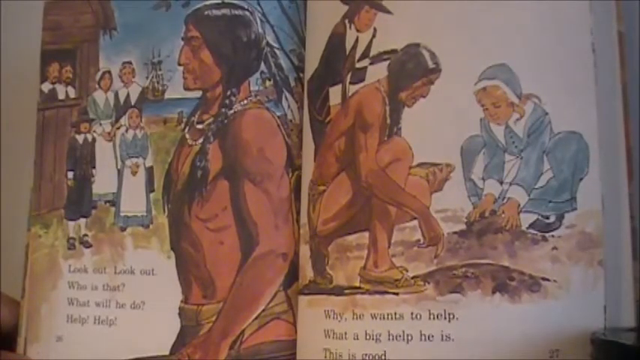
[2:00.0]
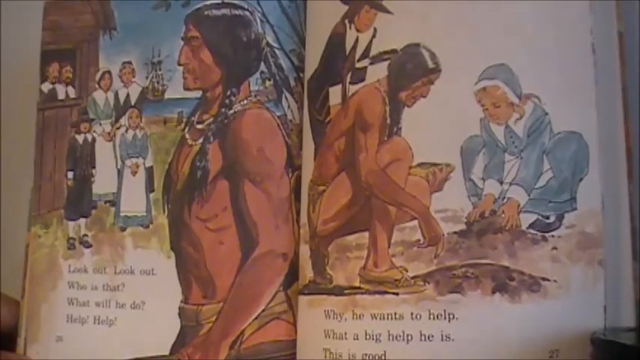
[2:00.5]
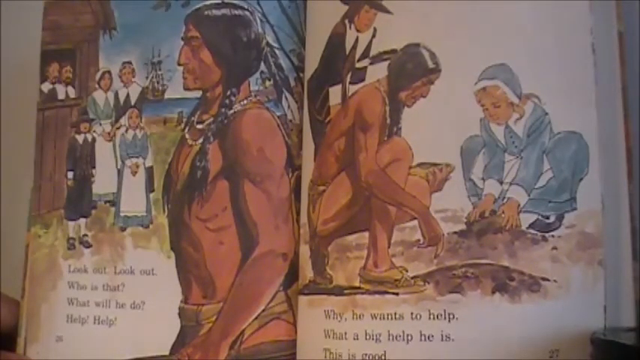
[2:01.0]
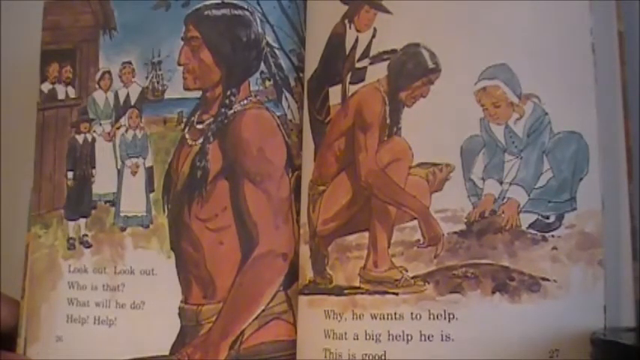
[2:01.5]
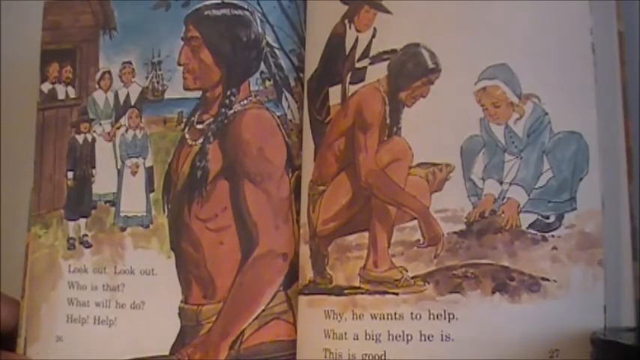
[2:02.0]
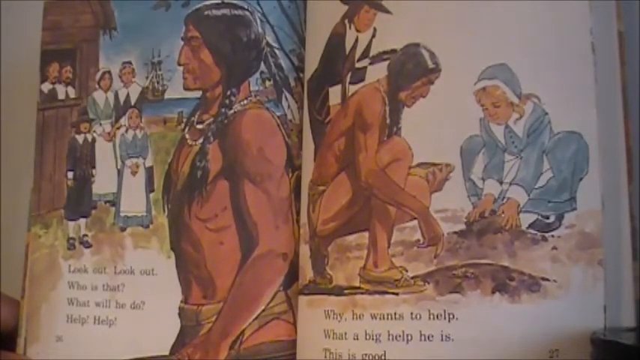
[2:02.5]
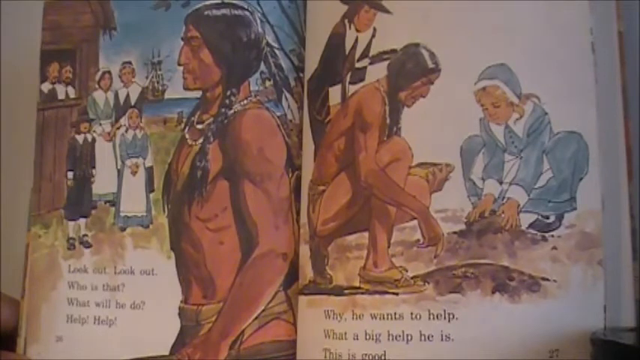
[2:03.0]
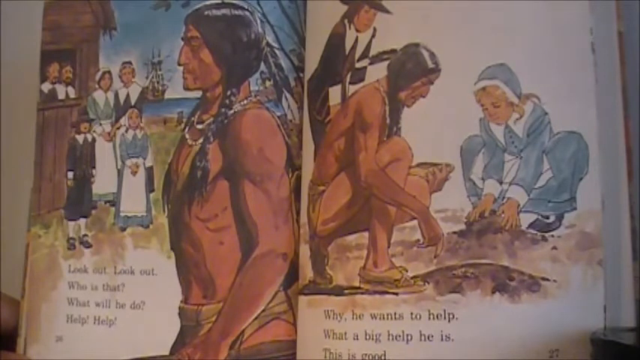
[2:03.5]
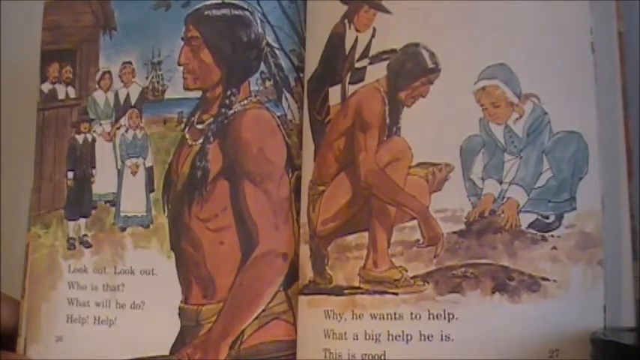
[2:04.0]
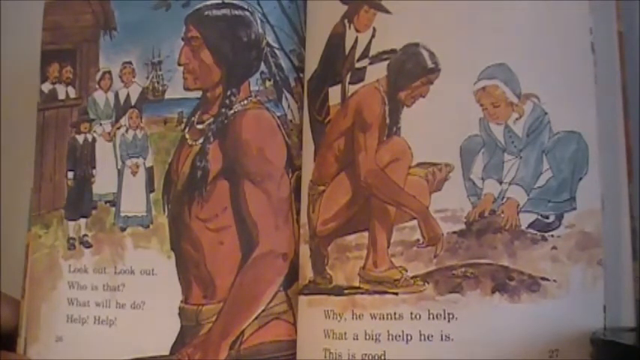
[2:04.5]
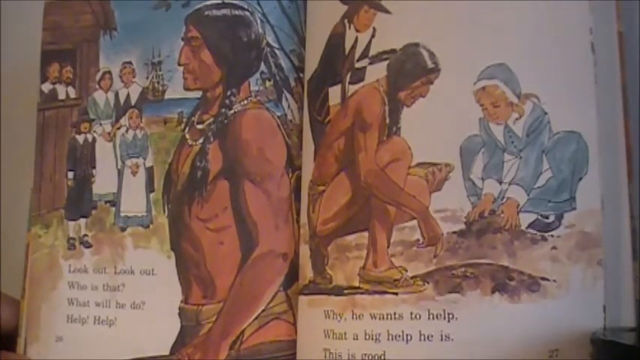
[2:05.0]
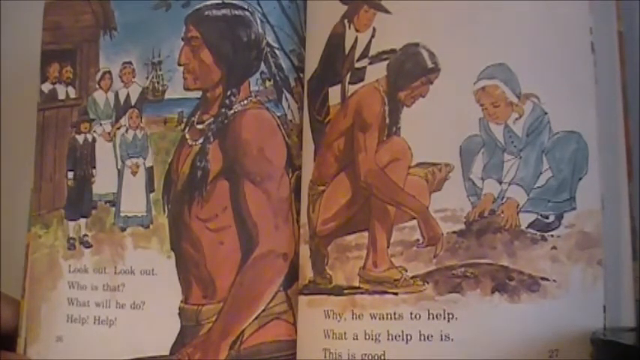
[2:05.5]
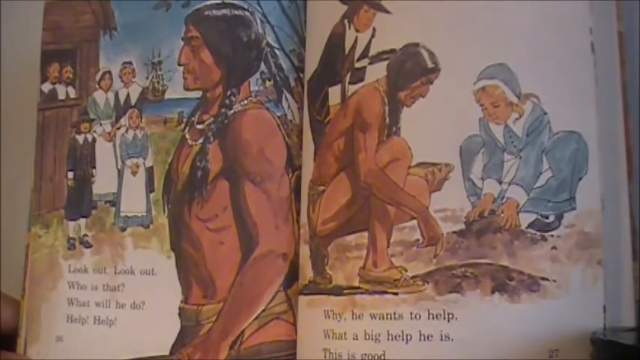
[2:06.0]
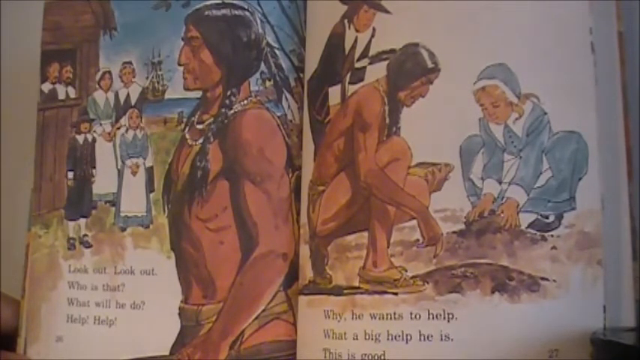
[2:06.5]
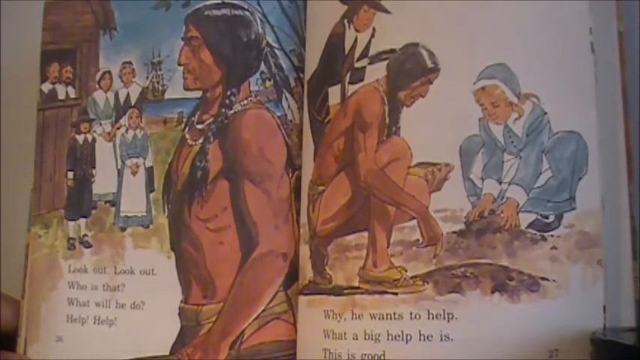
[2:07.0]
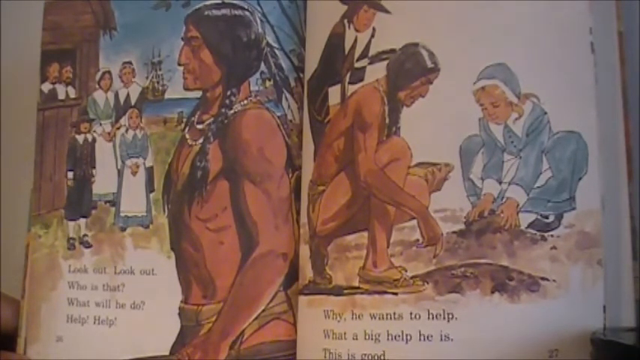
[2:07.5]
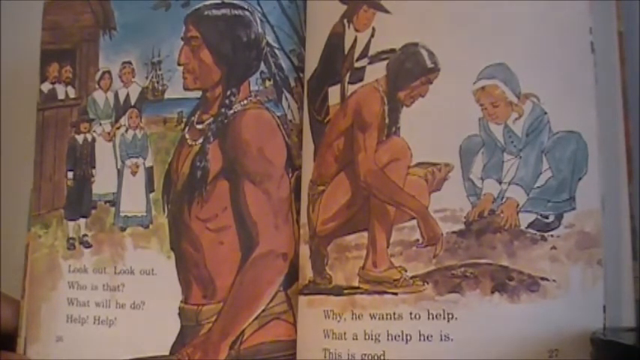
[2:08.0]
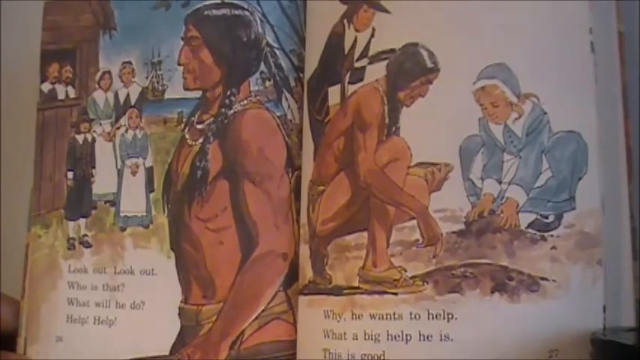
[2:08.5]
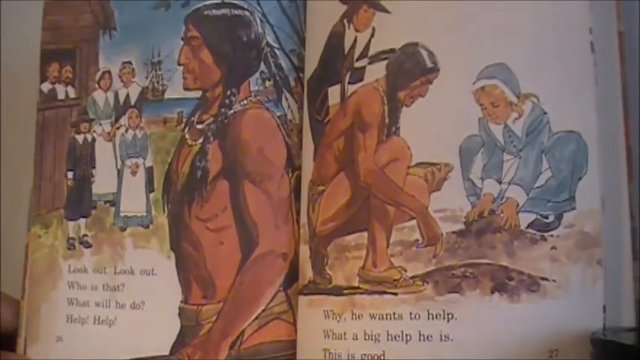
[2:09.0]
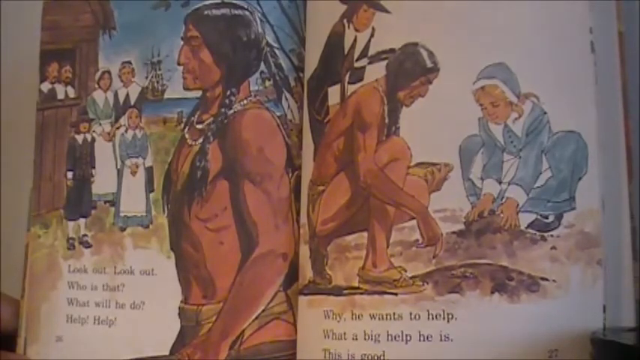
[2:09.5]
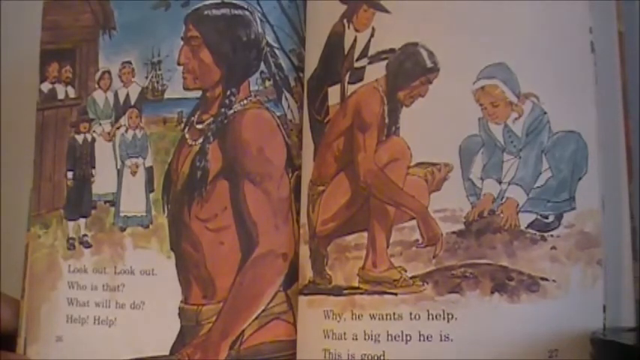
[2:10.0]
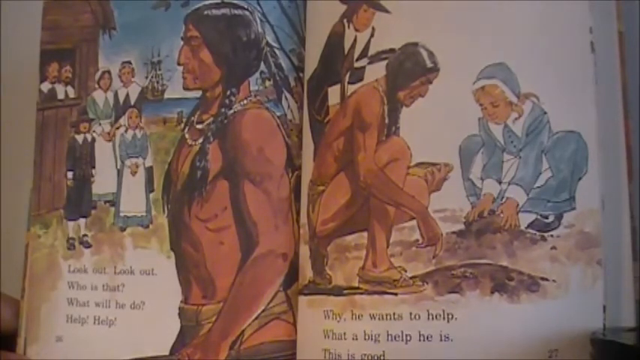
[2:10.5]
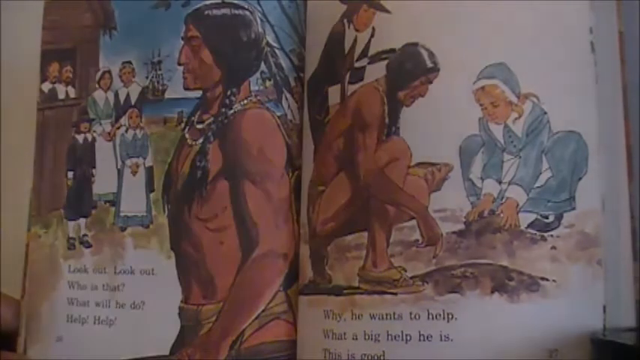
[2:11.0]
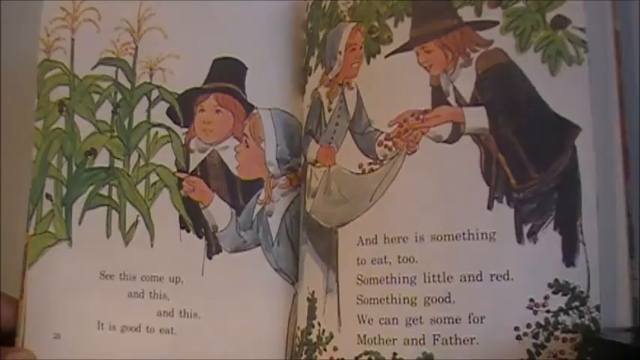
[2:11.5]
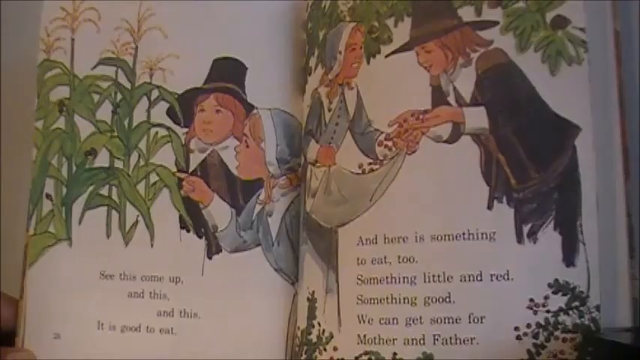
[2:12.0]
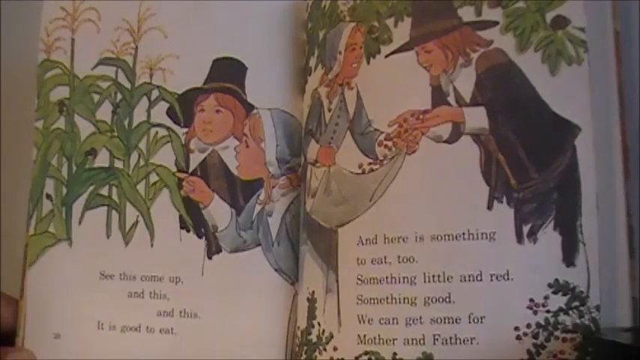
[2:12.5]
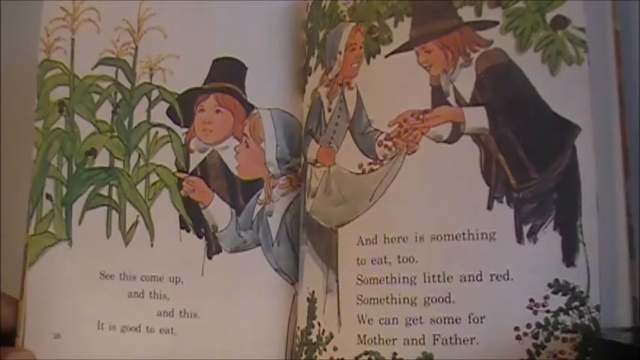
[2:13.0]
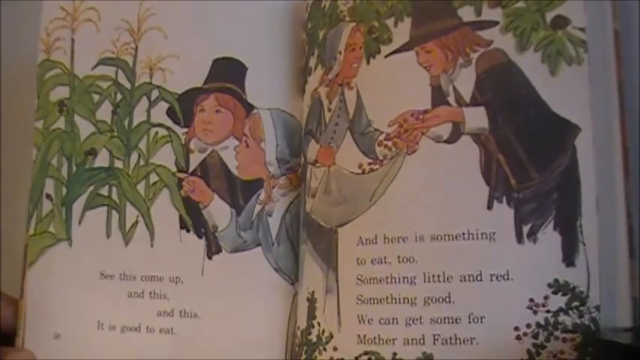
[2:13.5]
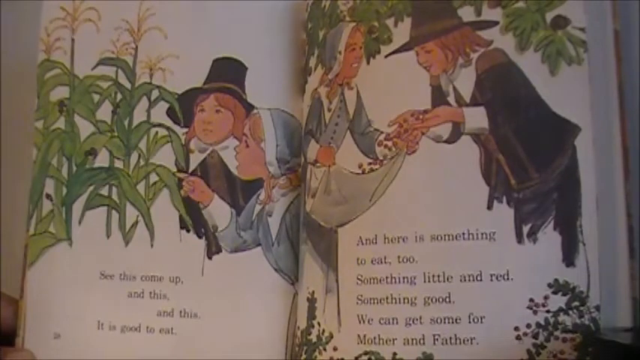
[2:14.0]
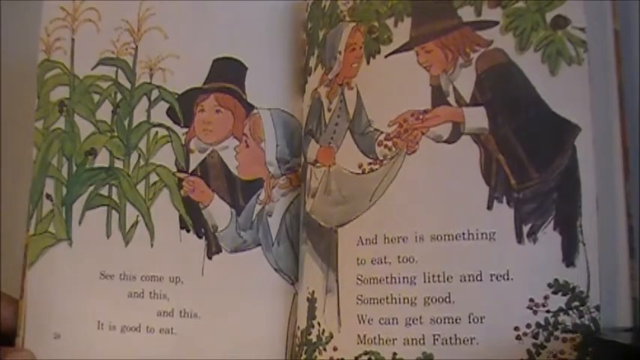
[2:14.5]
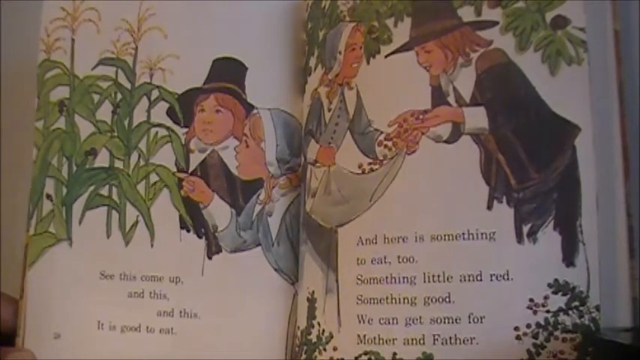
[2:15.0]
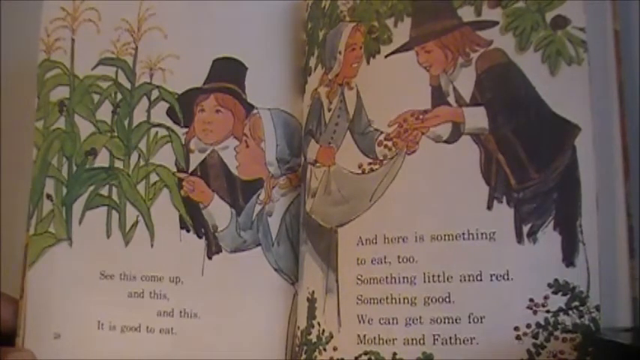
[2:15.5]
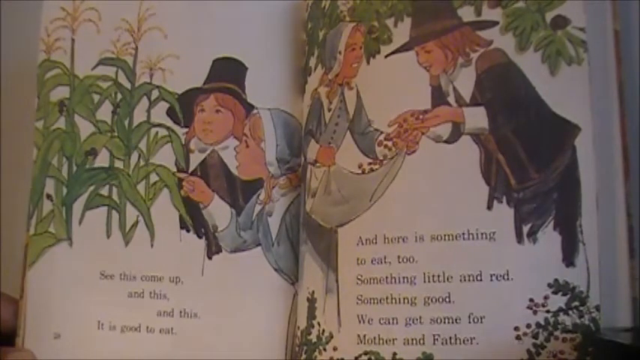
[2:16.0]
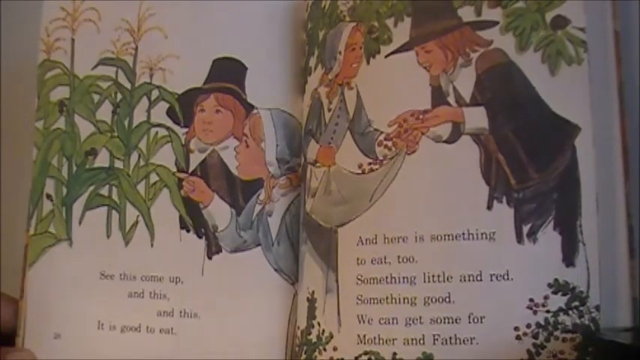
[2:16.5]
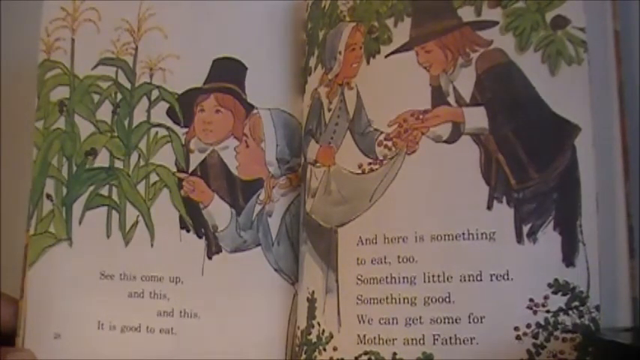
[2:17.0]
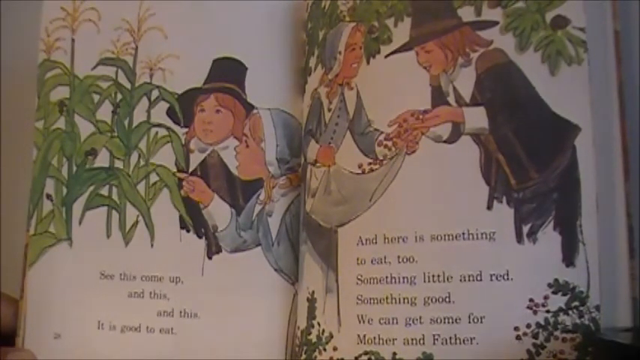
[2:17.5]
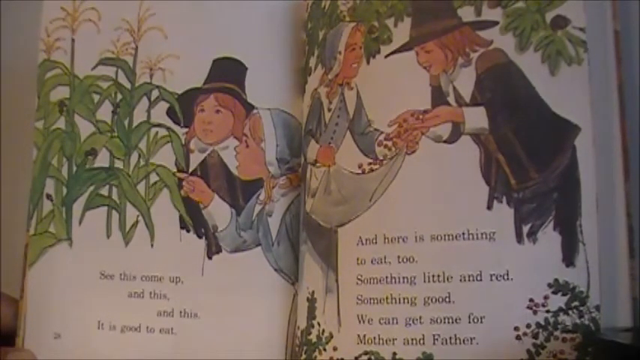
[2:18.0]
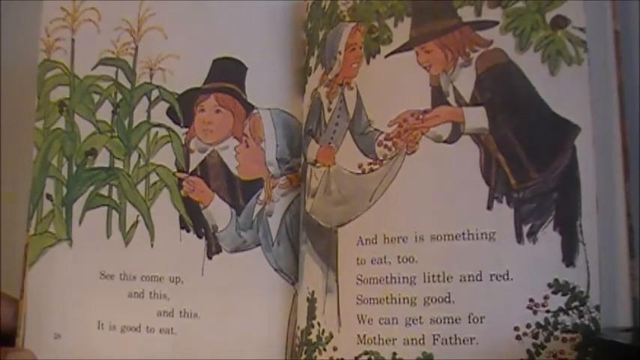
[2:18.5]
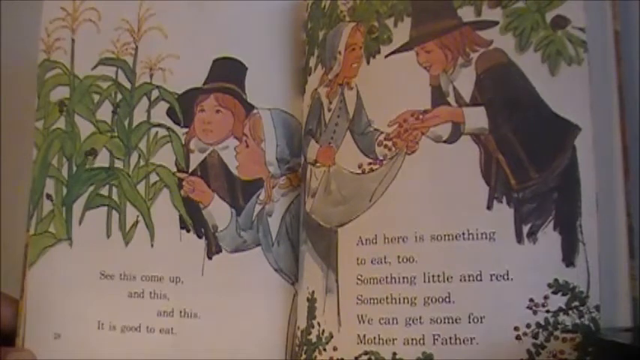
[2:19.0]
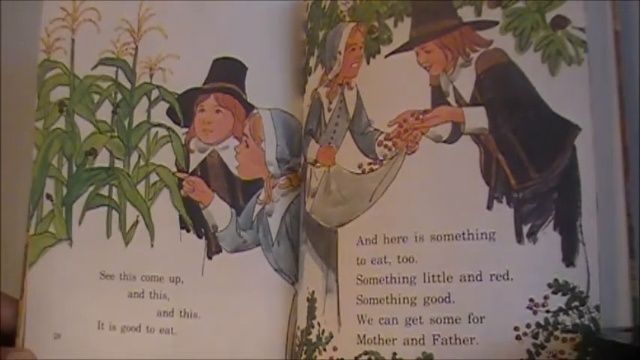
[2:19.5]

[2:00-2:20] The next spread shows two images. One shows some settlers by their house and a side profile of an American Indian man, possibly the one from the cover, with the same braids and feather in his hair. The other side of the spread shows the man crouching down, apparently planting seeds in the earth, with a mound of earth in front of him. The children from the cover are also in this image: the boy is bending over to watch, and the girl seems to be mimicking, making a mound of soil. The next page shows the two children from the cover looking at some grown corn husks, with nothing else in the image. These images have no background, just white. The other image seems to show the same children, with the boy apparently scattering some red, small berry-like things into the girl's upheld apron, and there is an unidentified tree behind them.